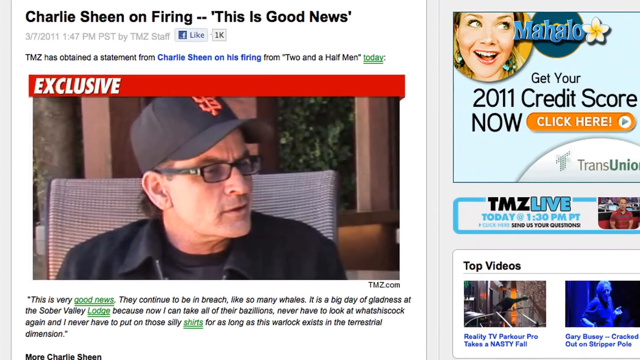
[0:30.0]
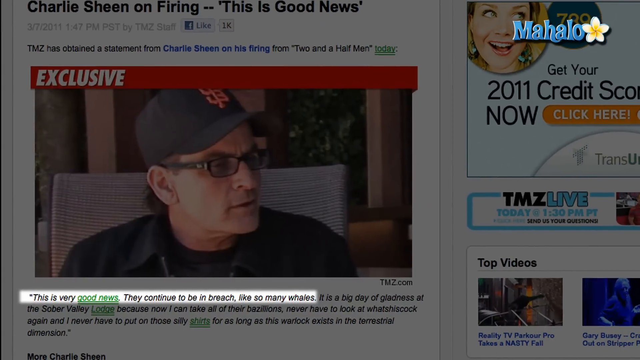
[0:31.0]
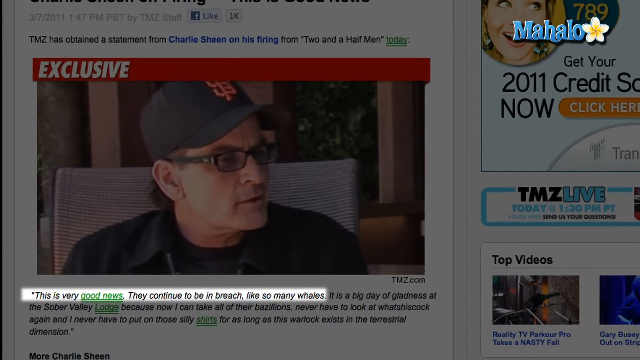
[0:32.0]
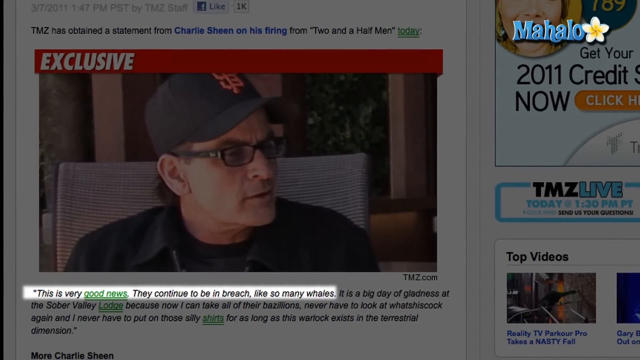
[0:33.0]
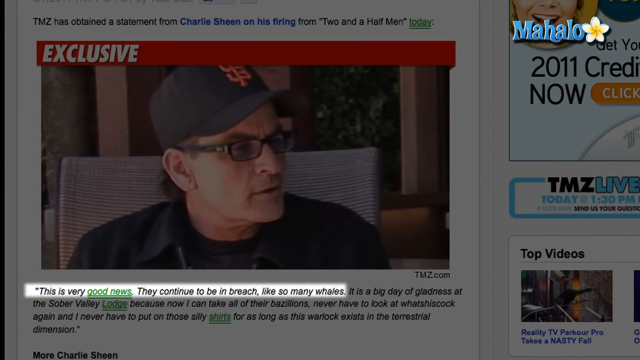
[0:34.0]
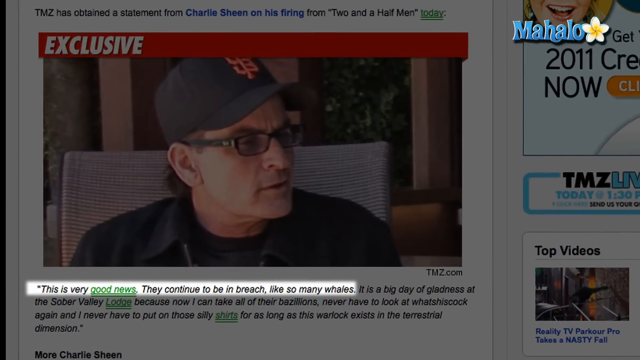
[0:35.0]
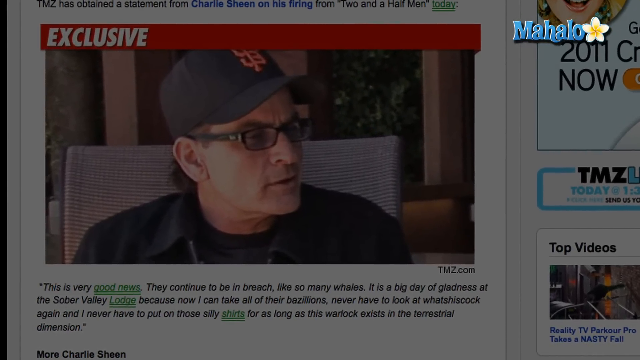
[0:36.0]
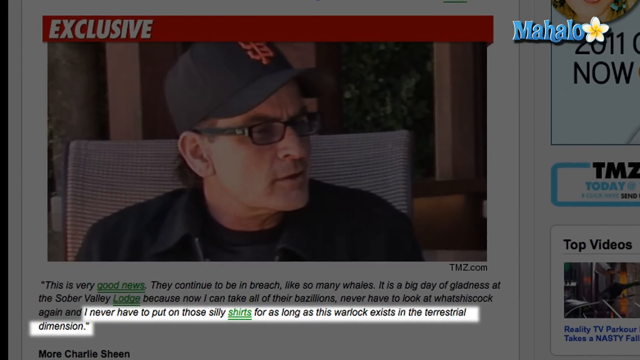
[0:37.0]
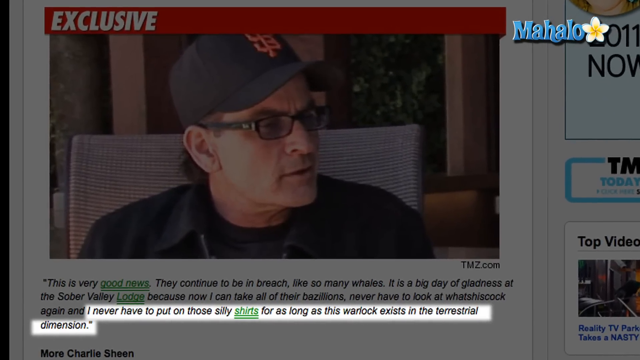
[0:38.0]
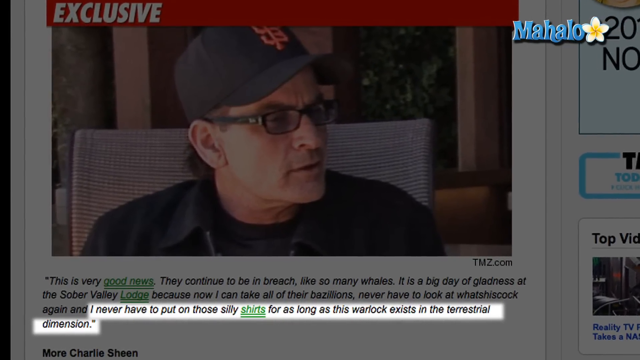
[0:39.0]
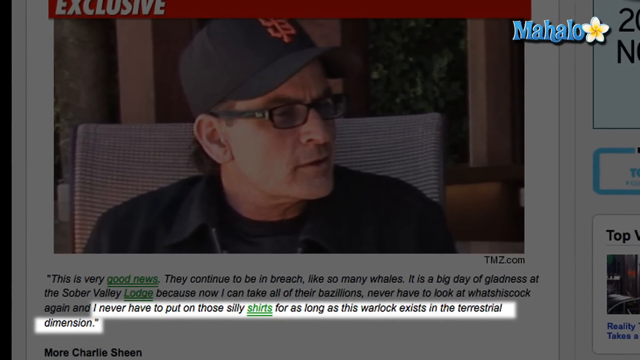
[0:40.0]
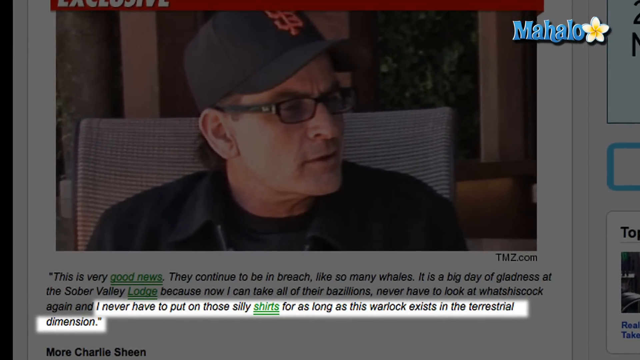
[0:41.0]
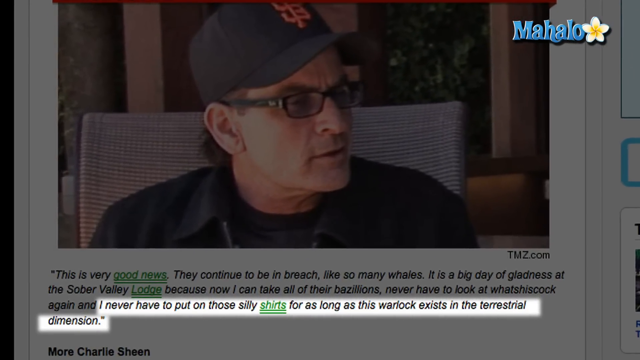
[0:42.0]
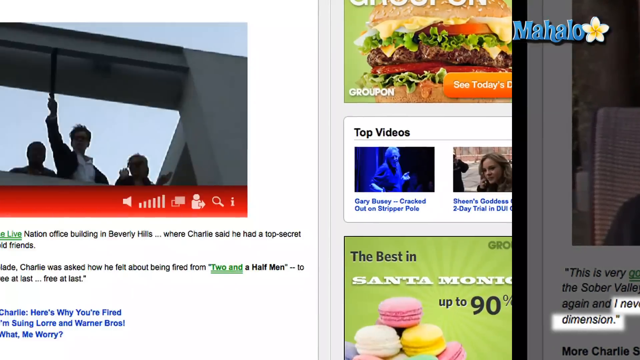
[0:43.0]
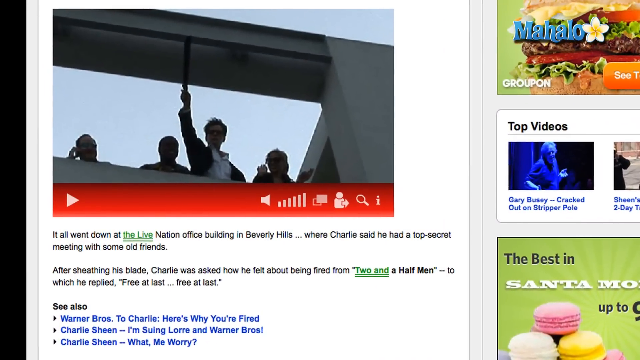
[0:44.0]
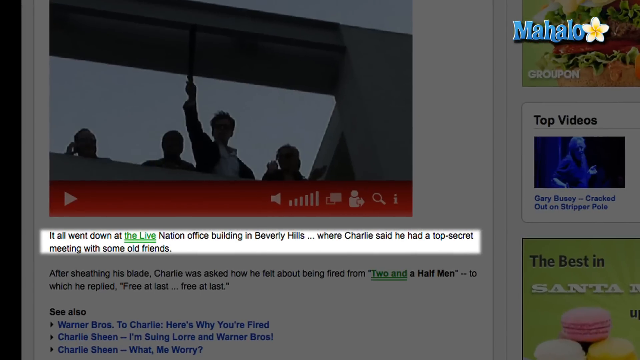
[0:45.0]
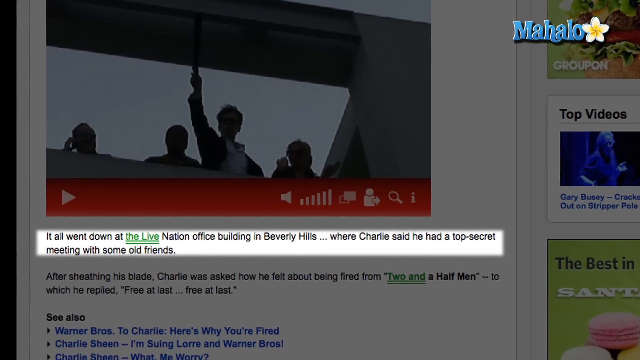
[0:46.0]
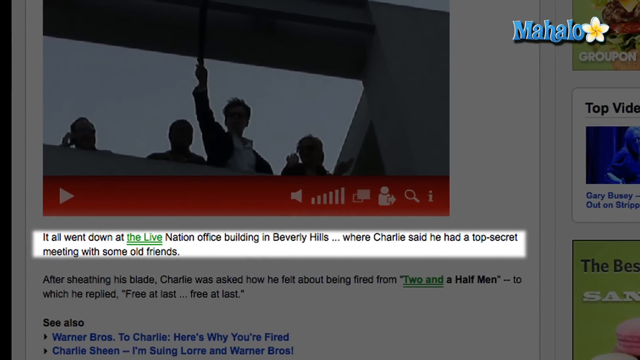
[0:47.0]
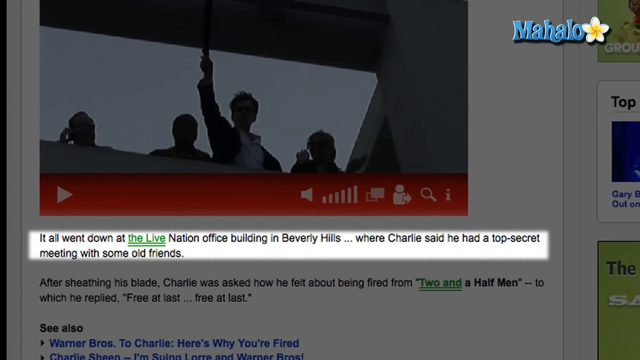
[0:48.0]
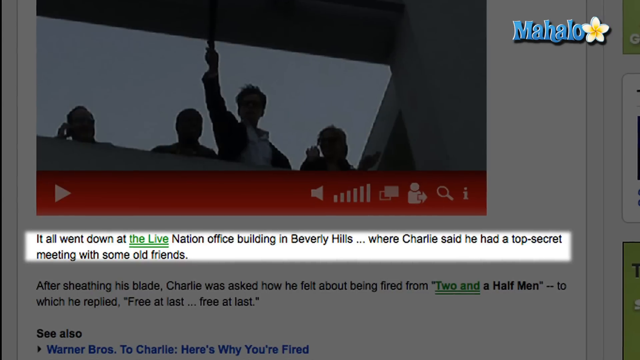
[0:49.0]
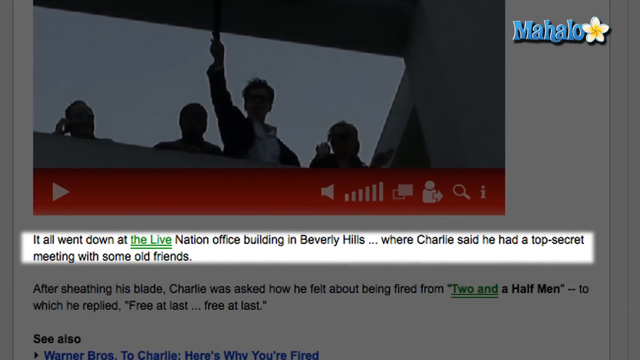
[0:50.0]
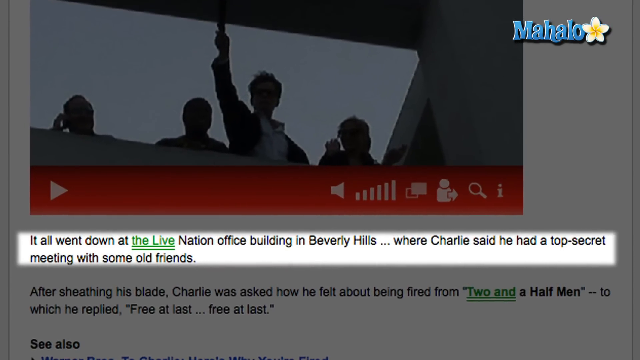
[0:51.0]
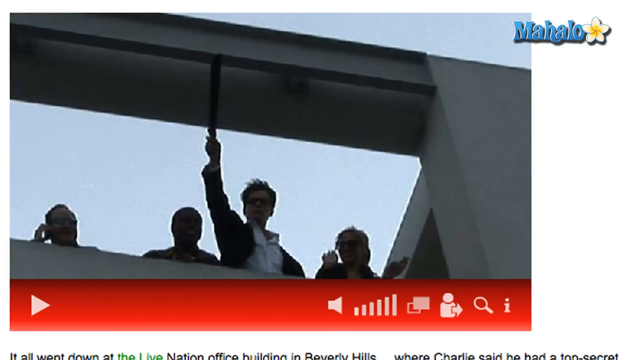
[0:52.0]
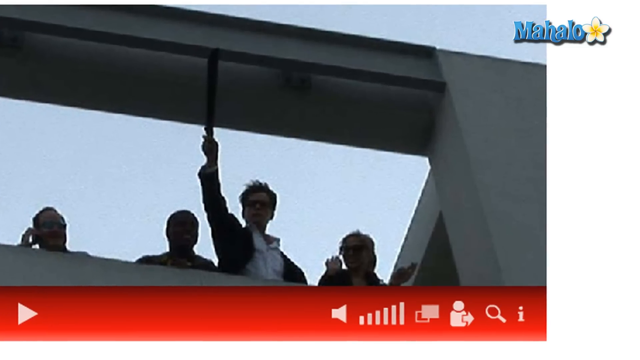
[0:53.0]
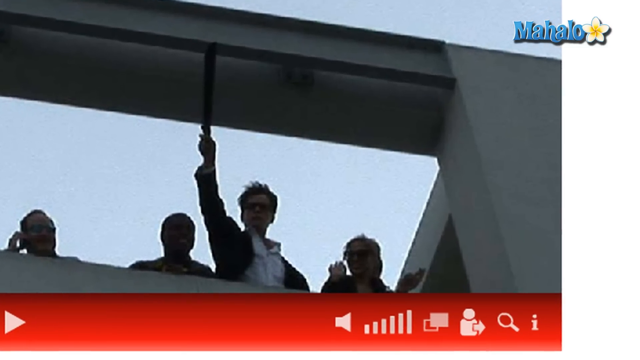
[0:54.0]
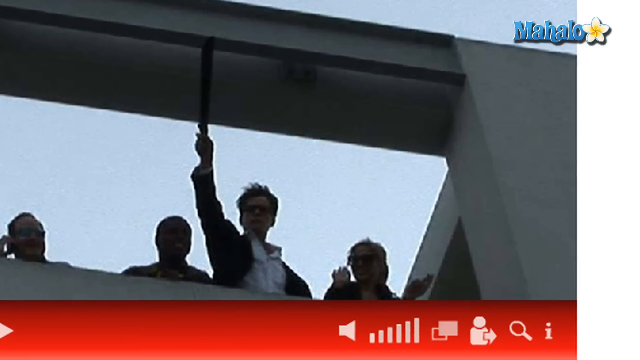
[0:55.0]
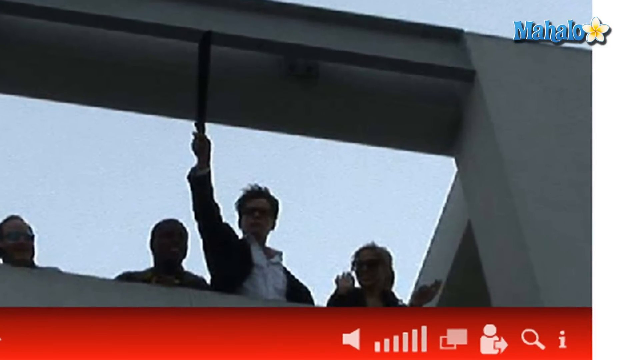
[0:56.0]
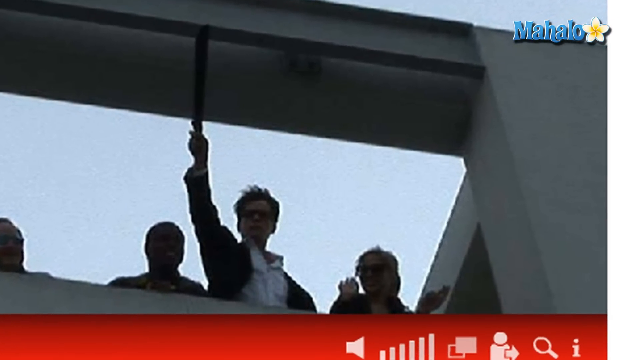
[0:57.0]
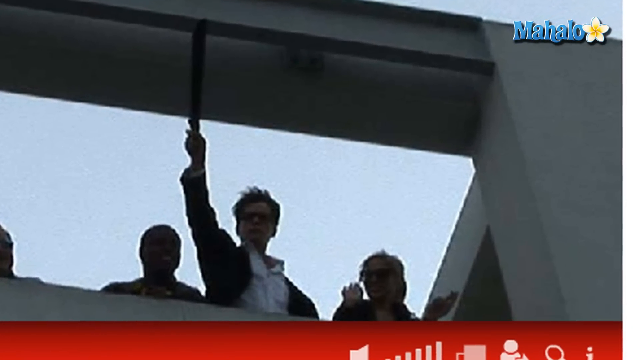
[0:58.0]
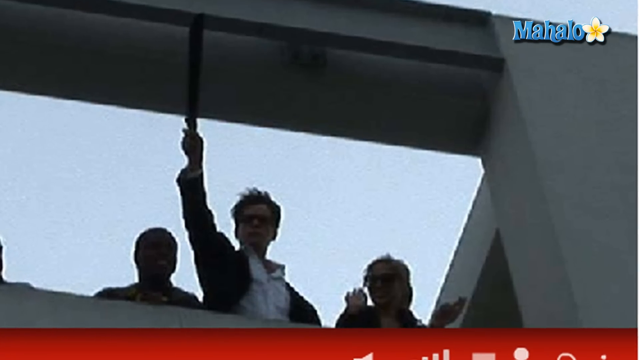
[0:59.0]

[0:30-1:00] The report turns to a meeting at the Live Nation office building in Beverly Hills, where Charlie Sheen, asked about being fired from Two and a Half Men, replies "free at last."